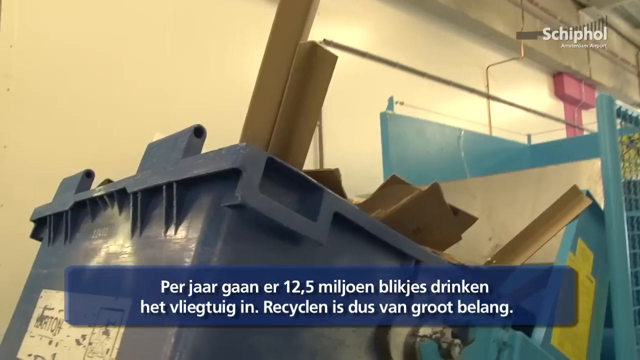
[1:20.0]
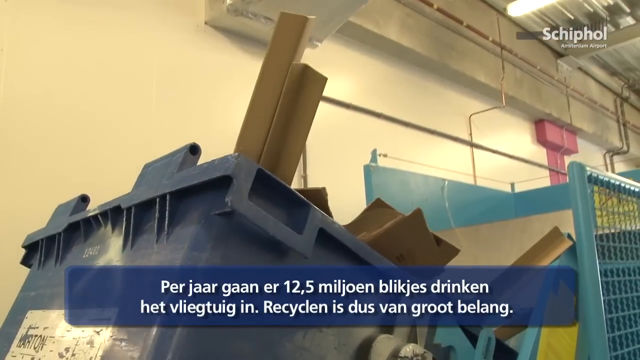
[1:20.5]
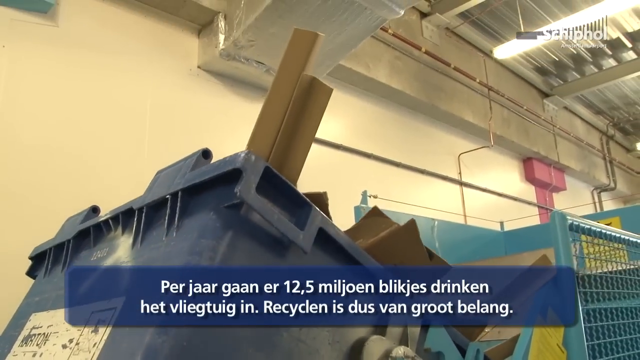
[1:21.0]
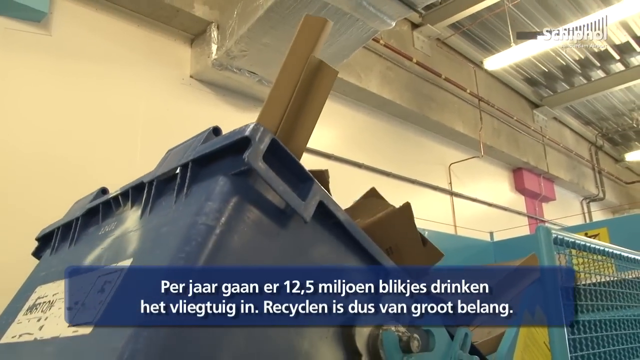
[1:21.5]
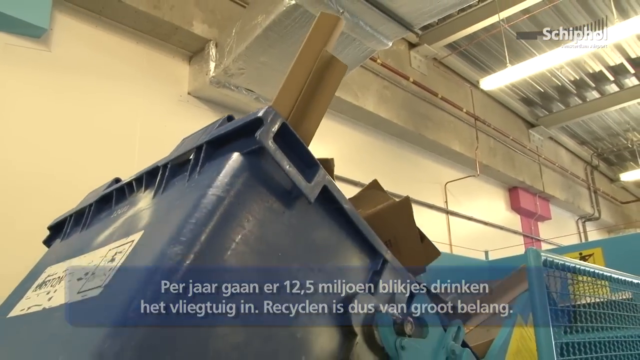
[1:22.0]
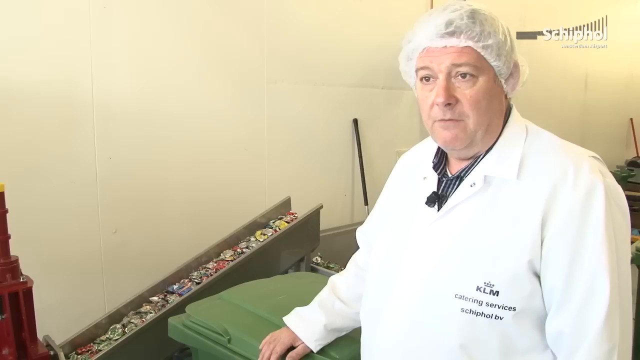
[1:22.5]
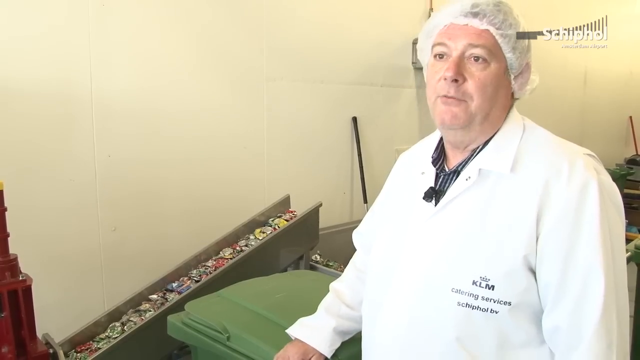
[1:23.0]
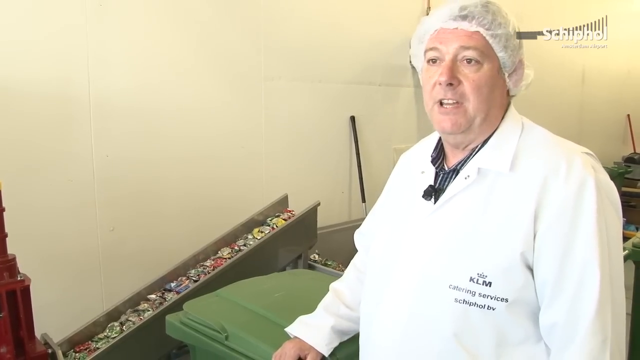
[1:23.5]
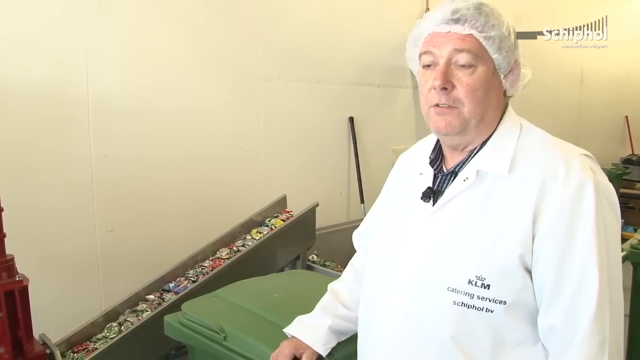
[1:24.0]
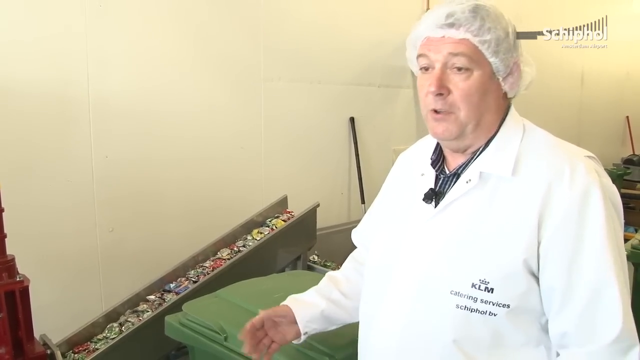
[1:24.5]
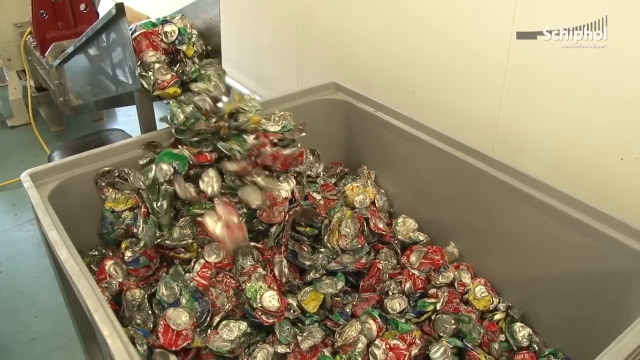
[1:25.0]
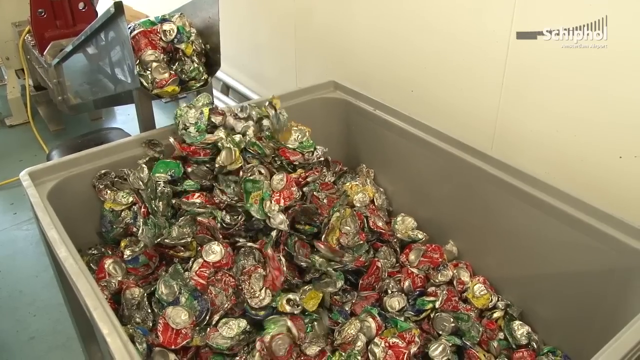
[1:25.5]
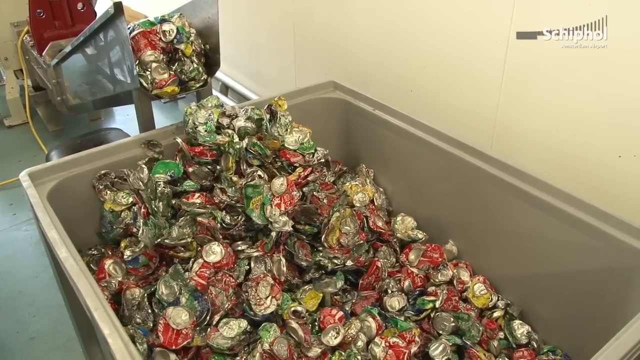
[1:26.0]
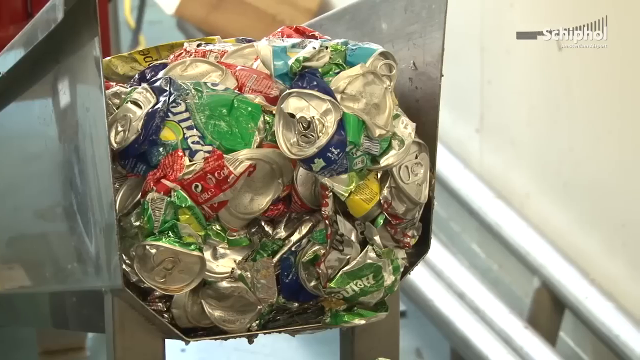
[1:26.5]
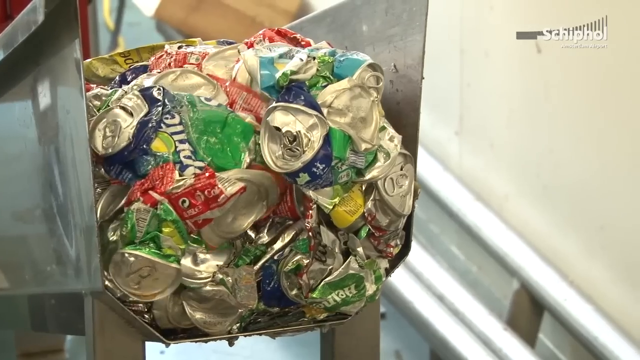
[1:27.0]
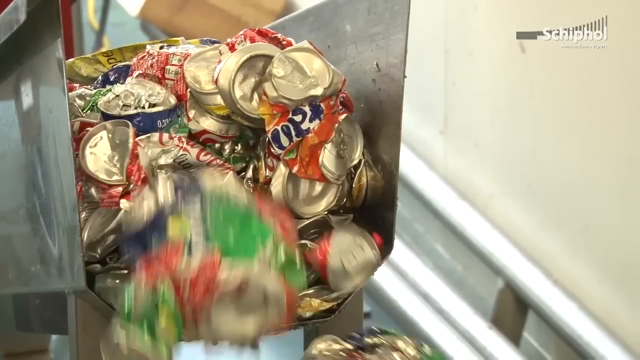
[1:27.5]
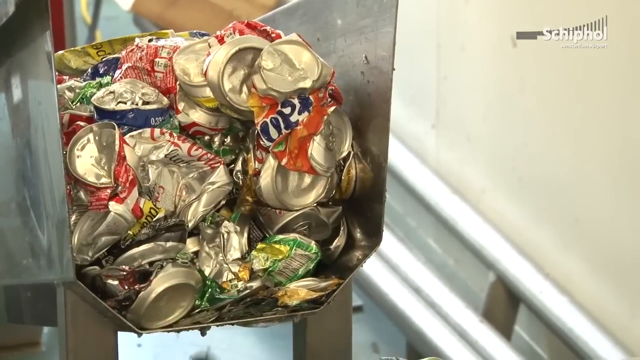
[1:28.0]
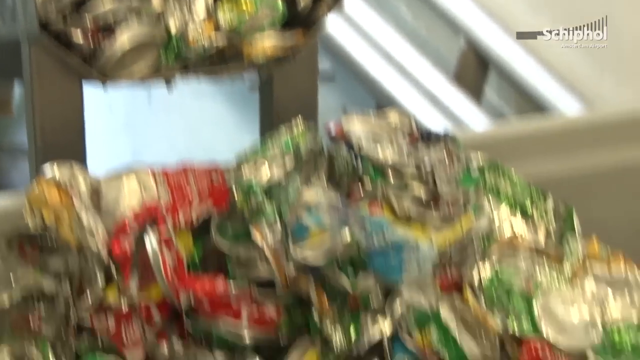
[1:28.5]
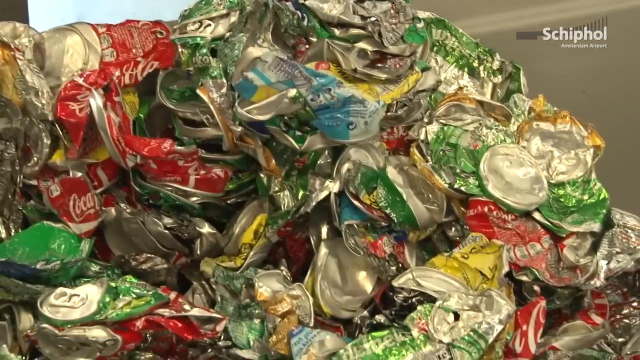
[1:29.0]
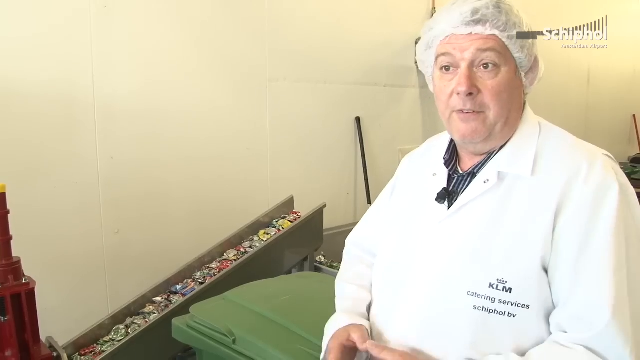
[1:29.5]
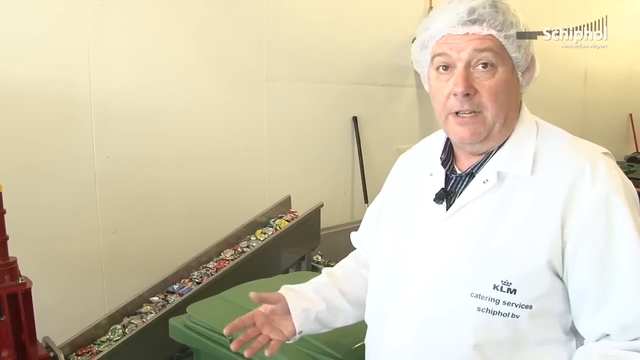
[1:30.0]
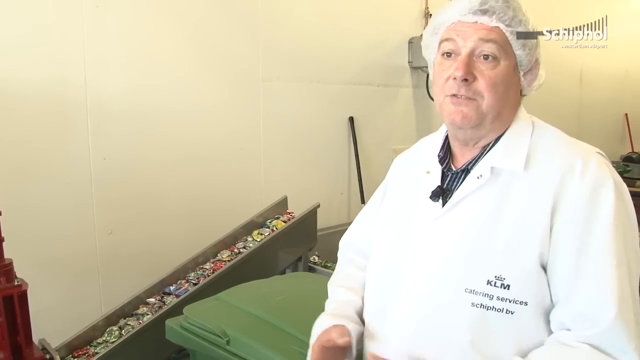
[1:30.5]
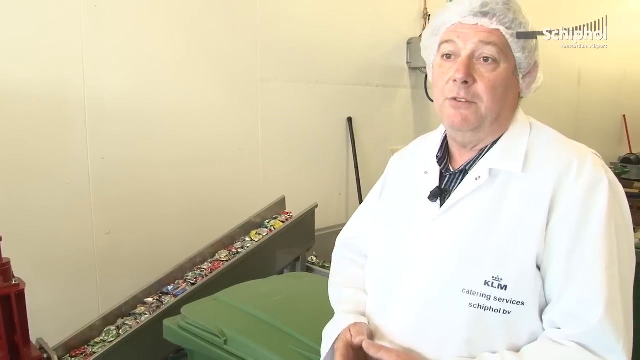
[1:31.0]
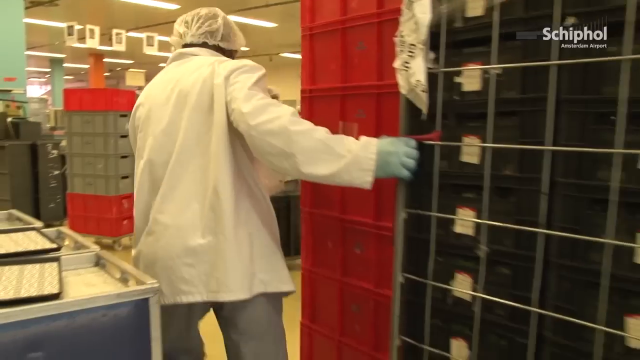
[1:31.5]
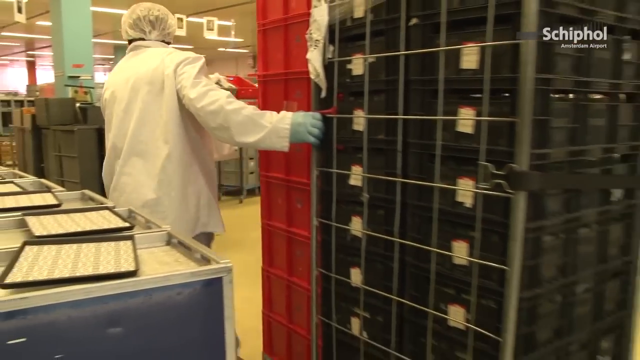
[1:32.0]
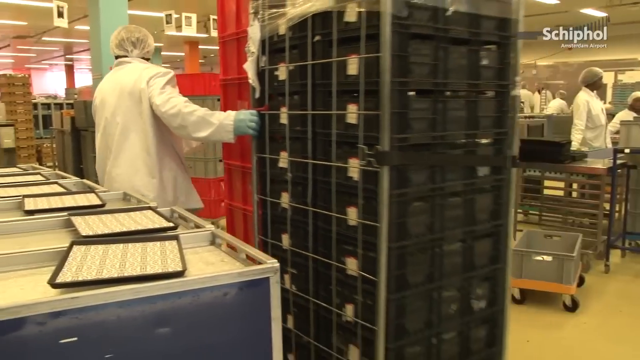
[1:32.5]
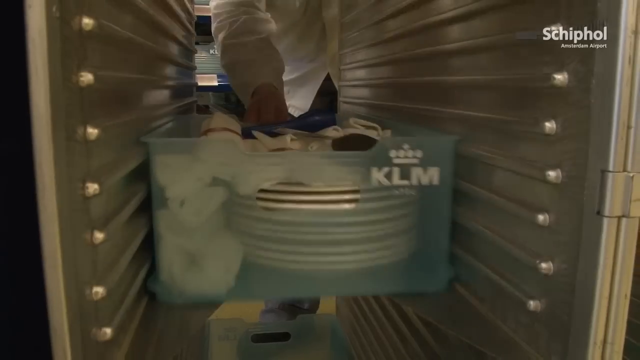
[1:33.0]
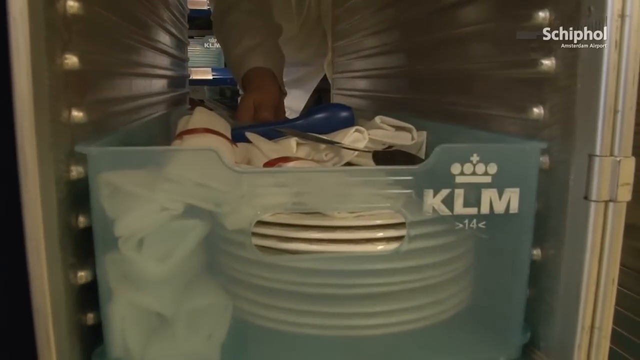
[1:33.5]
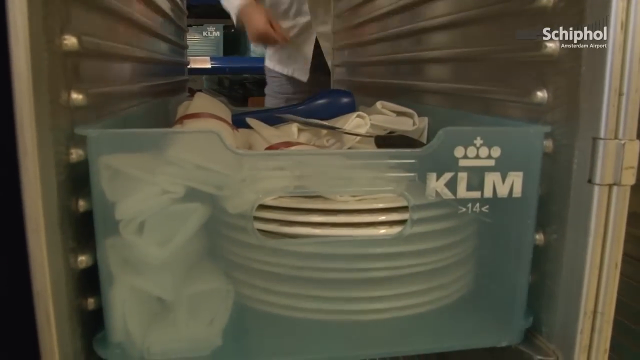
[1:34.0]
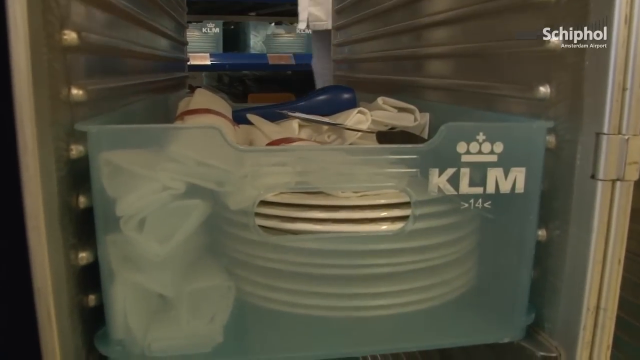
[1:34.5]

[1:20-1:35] A machine with a blue recycling bucket lifts it up into a dumpster. Crushed aluminum cans move into a stainless steel container. The chef, in a white chef's coat and head covering, is shown talking. People in the kitchen push large carts around with dishes. Dirty dishes go into what is presumably a commercial washing machine. A semi-transparent blue bin with the letters "KLM" on it holds a stack of dishes, along with spoons and items wrapped in napkins, probably used on the flight. A very quick shot shows a tray with plates of food on it being rolled, with no person visible.